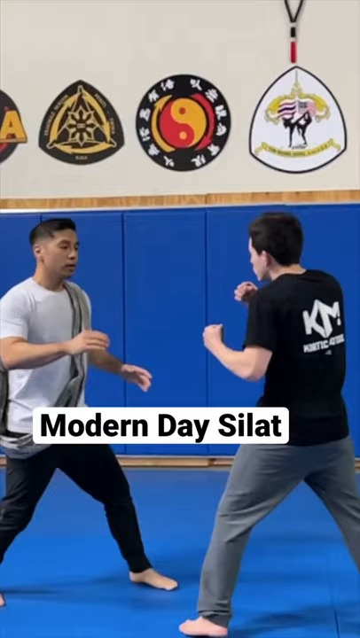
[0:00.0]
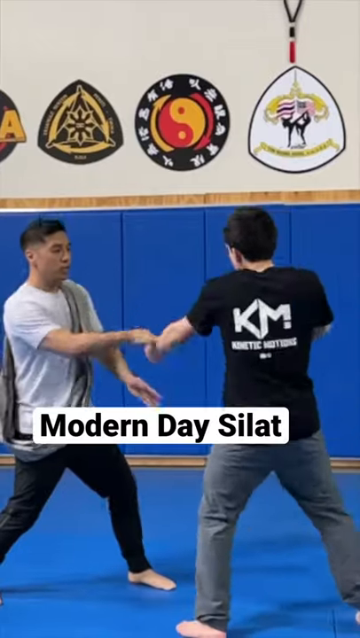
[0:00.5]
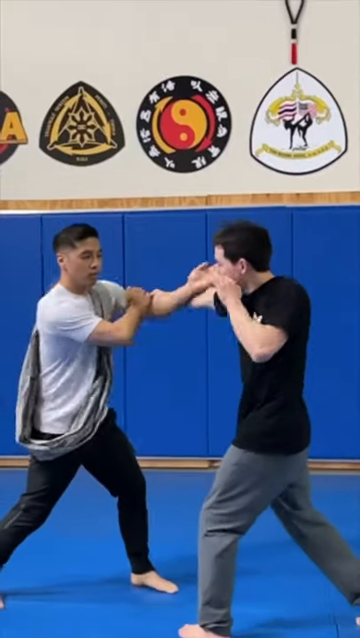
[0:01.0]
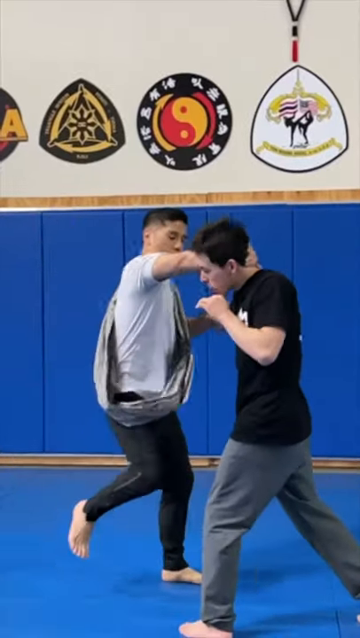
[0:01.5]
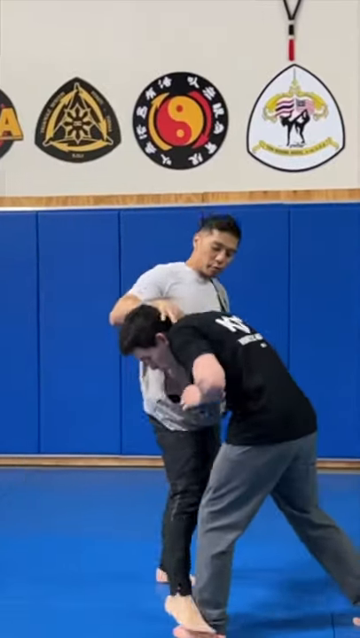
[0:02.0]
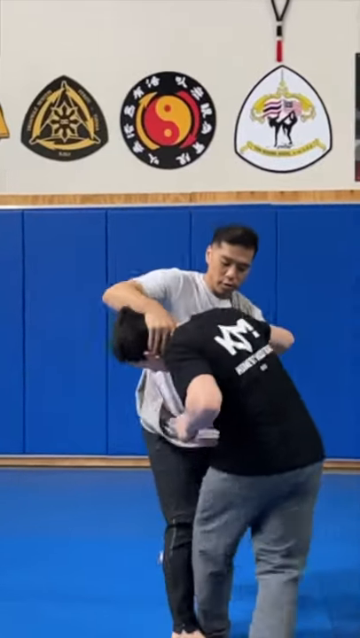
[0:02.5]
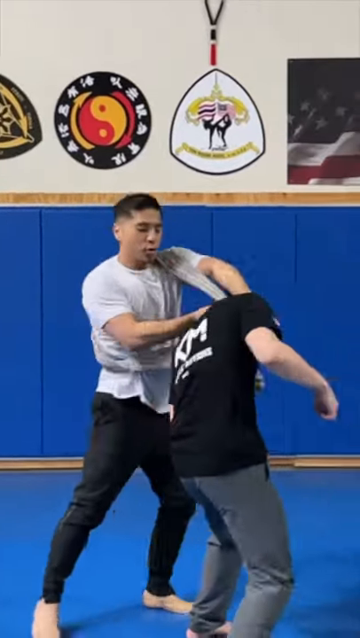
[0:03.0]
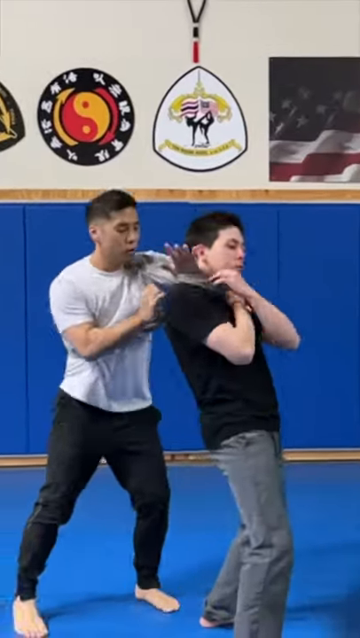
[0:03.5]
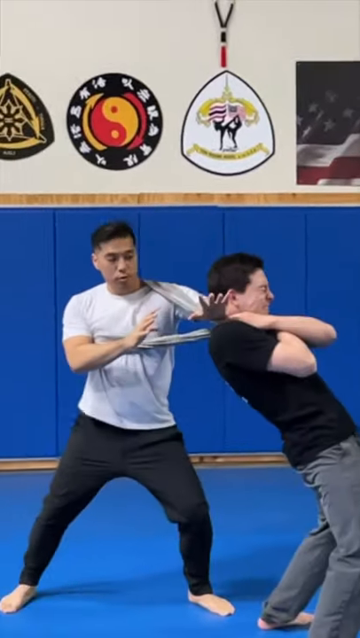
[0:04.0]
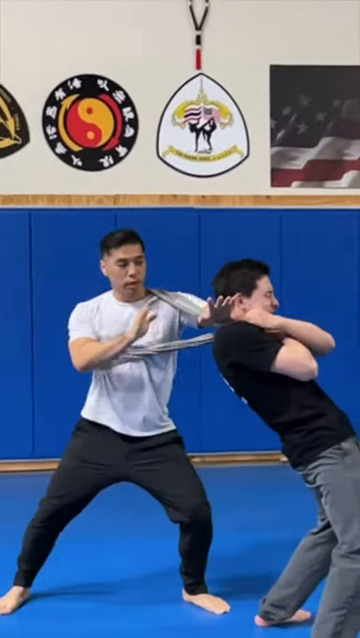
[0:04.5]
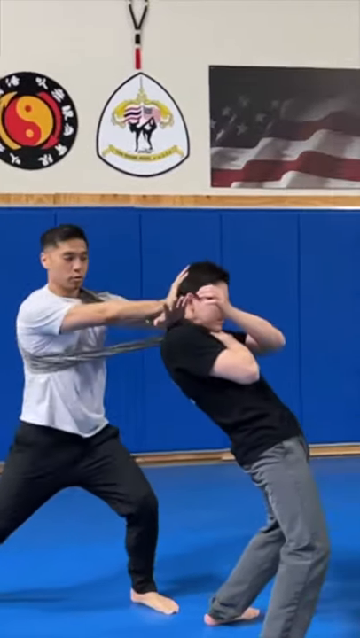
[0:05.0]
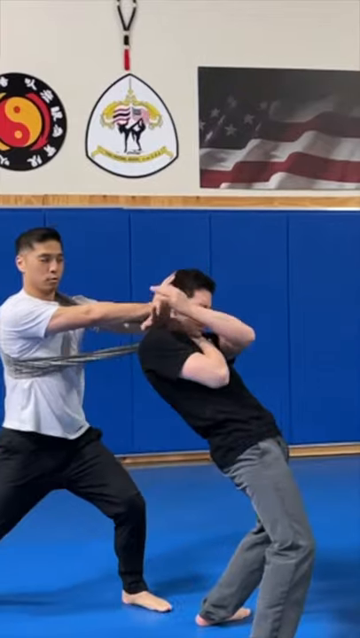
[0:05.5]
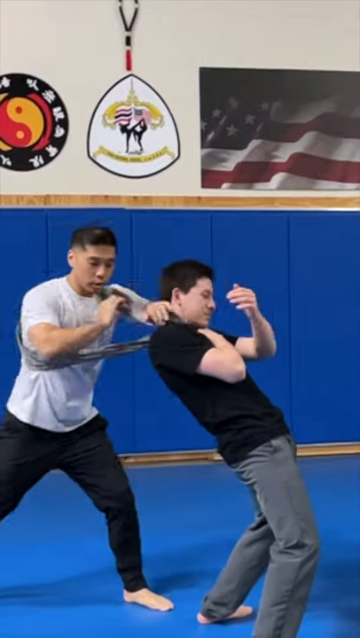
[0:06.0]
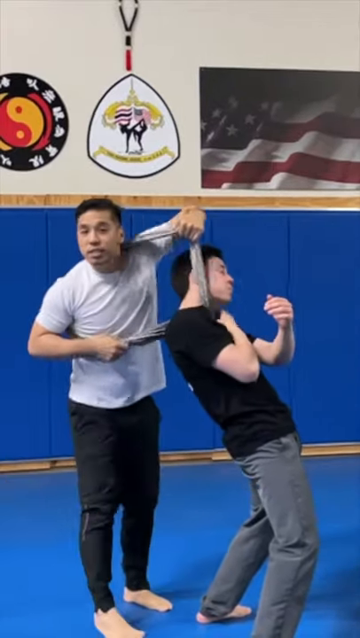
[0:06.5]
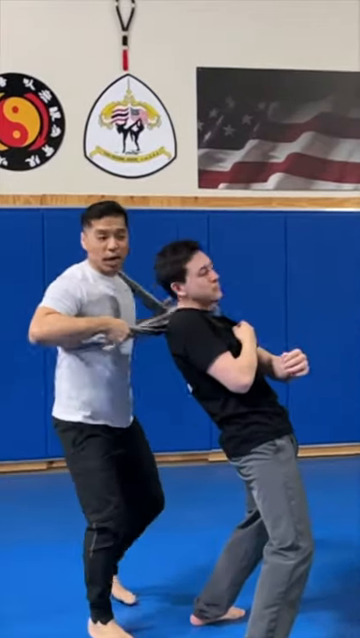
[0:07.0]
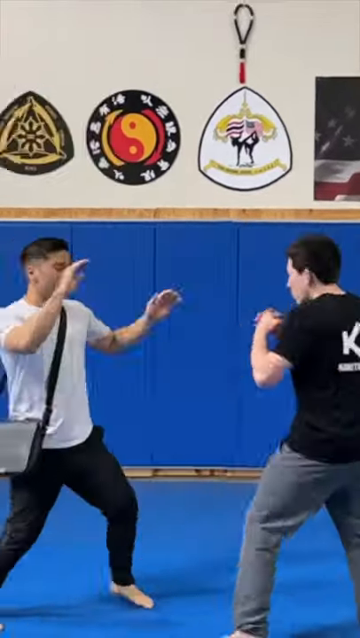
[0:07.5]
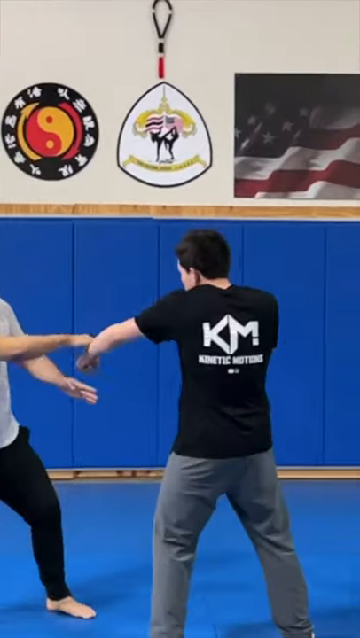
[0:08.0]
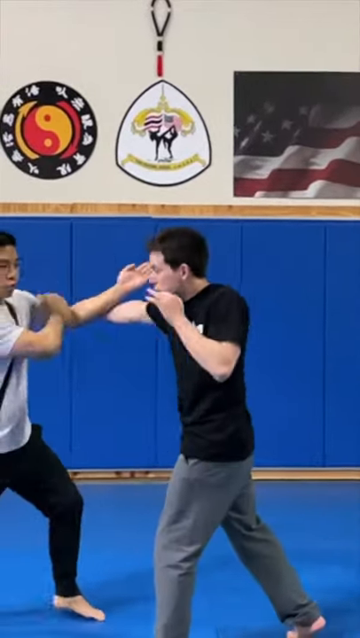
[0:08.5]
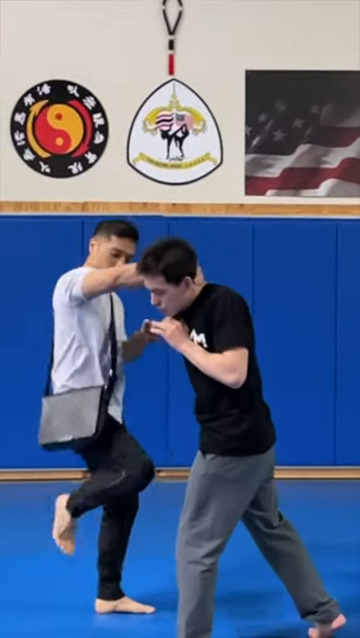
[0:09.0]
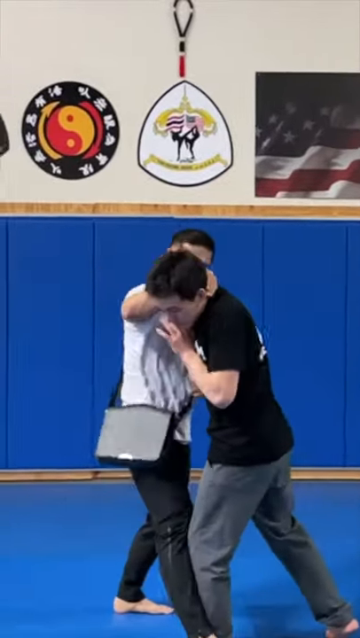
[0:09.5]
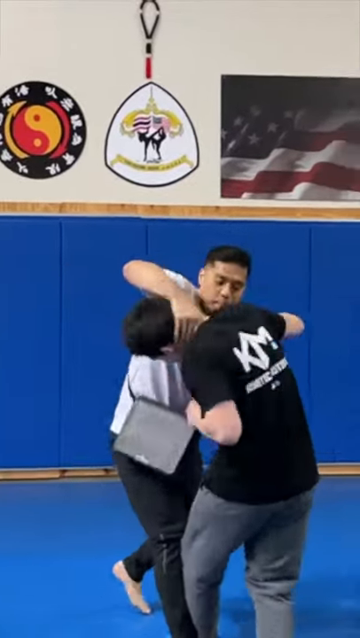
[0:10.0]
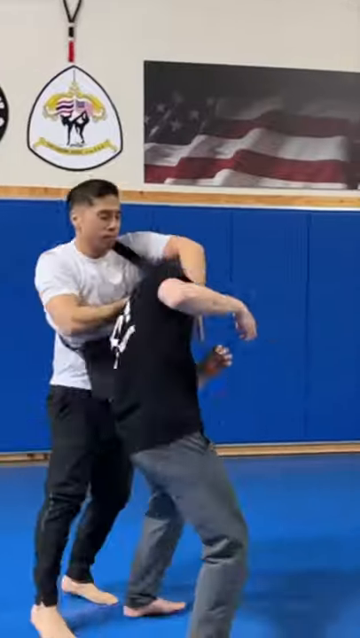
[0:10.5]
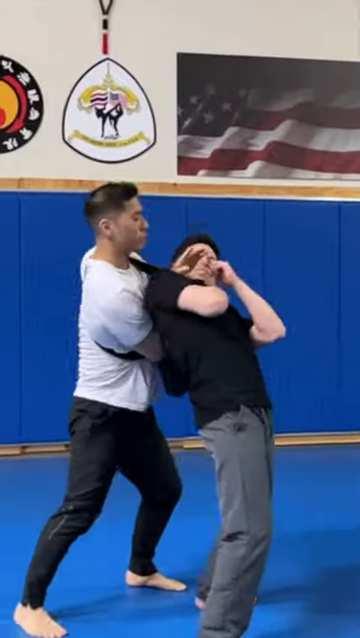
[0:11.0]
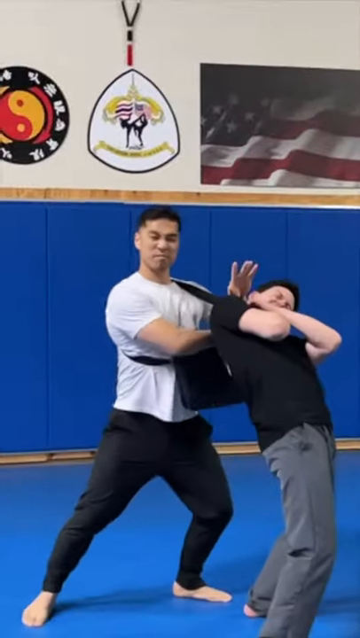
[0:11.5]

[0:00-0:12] What appears to be some type of karate or self-defense is being practiced, and it seems to be a class: a teacher demonstrates, almost in slow motion, to a student. At the beginning, a graphic or word pops up reading "modern-day silat", possibly the name of the move. The demonstration starts with a gray wrap, apparently a stretchy one, that they use for learning. After throwing a couple of fake punches, the teacher wraps it around the neck of the other person; the goal of the move is to wrap the strap around the opponent's neck. There is a very smooth transition with barely any visible cut. There is also a cross-body bag, and its strap, like a purse strap, is what ties up the other person around the neck.